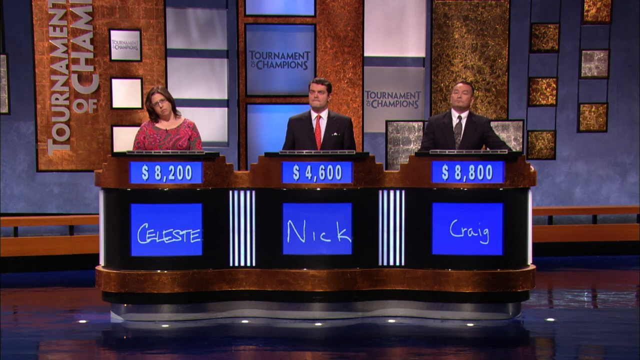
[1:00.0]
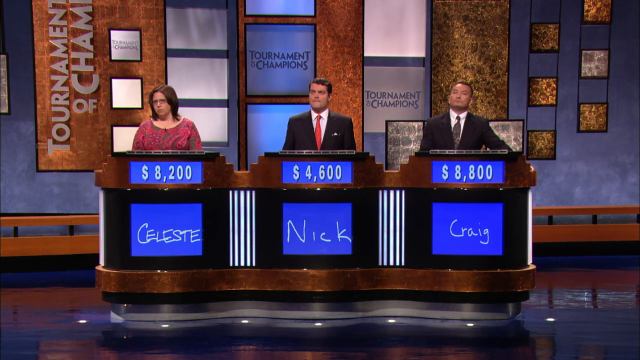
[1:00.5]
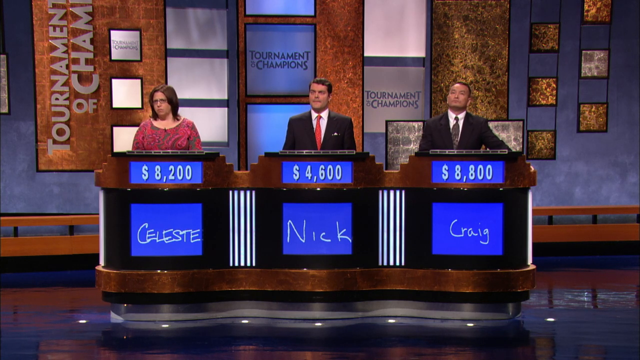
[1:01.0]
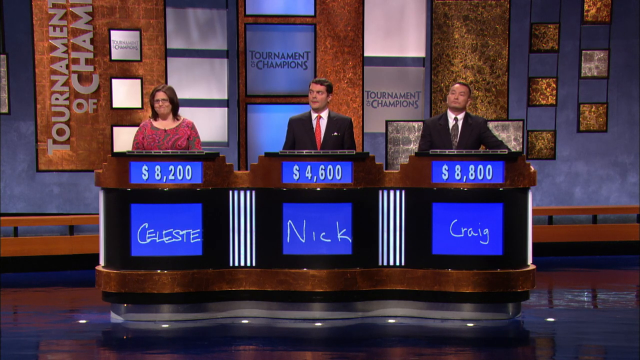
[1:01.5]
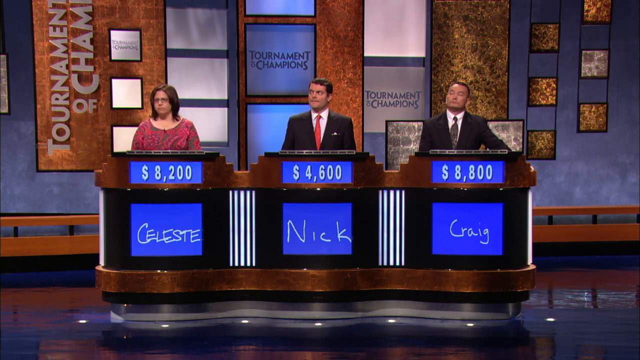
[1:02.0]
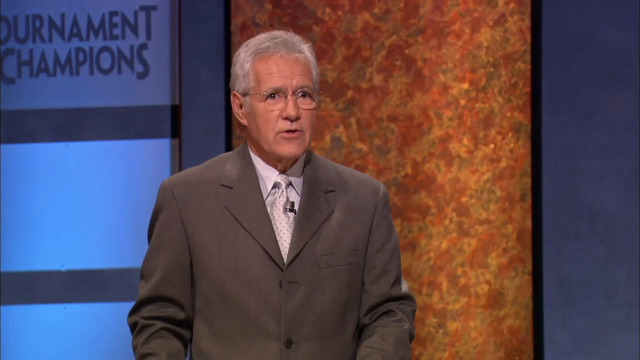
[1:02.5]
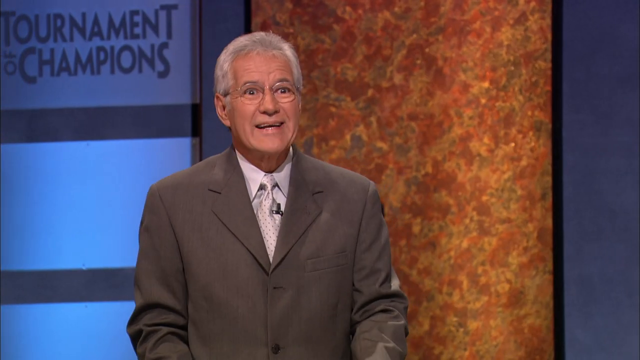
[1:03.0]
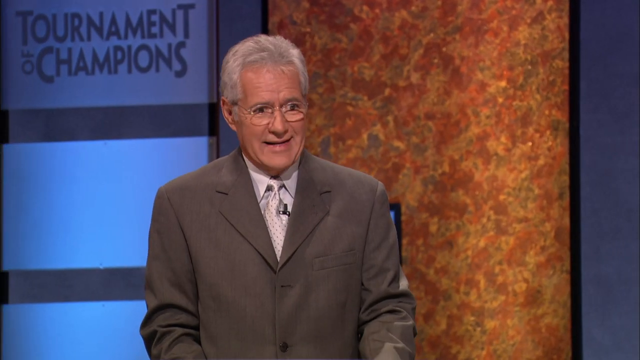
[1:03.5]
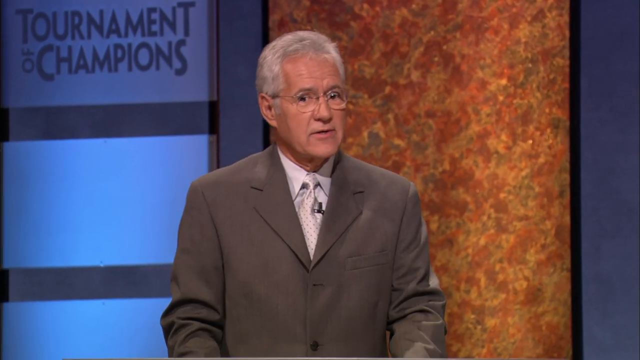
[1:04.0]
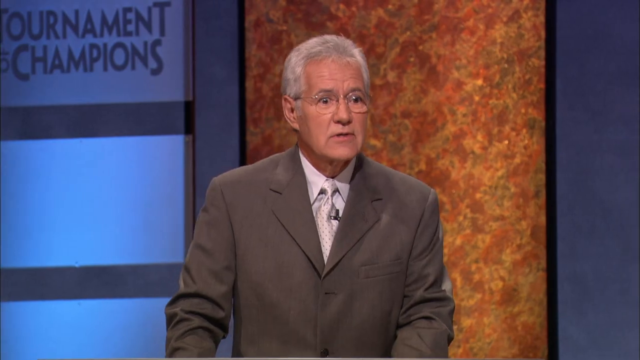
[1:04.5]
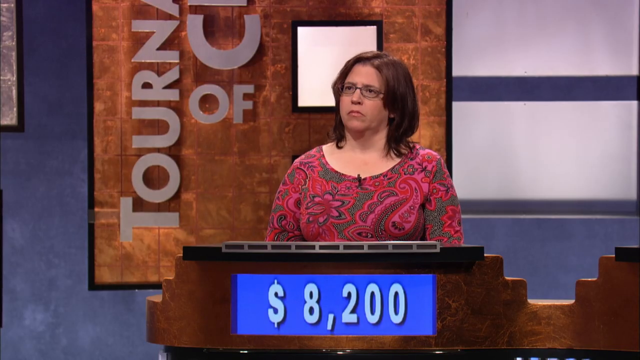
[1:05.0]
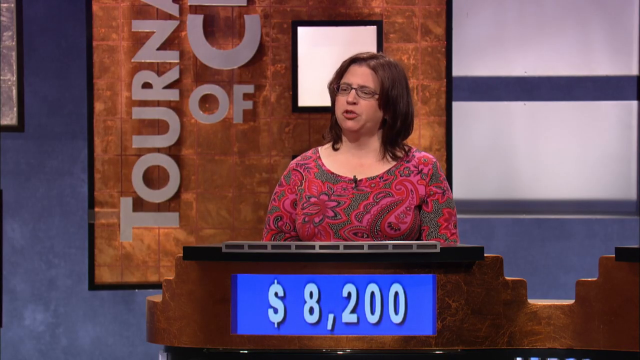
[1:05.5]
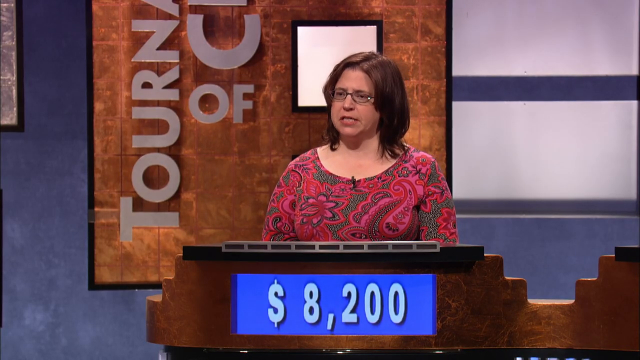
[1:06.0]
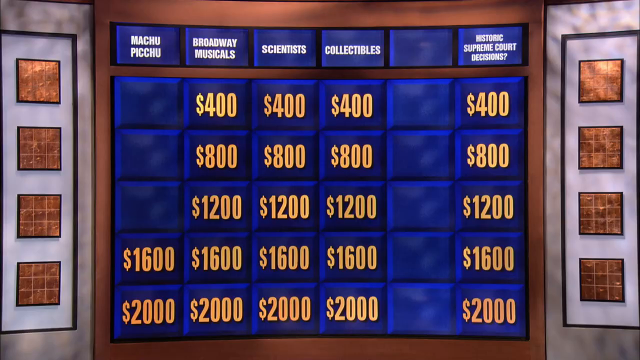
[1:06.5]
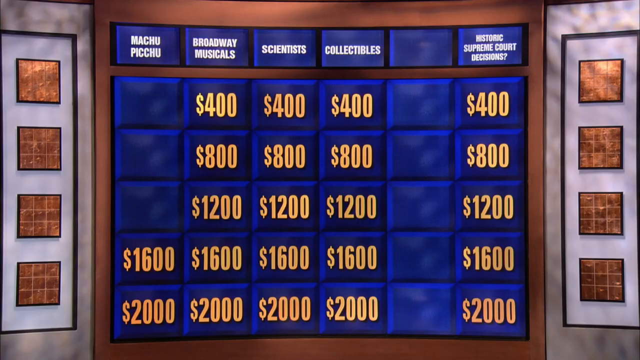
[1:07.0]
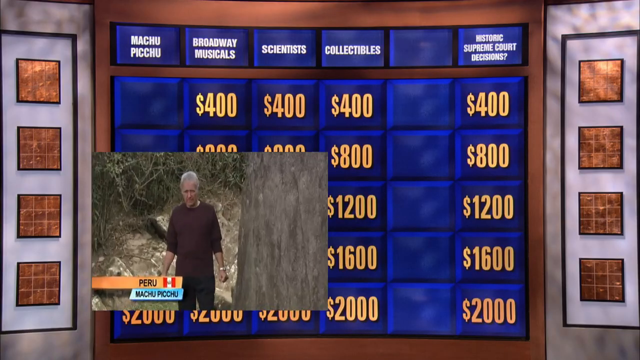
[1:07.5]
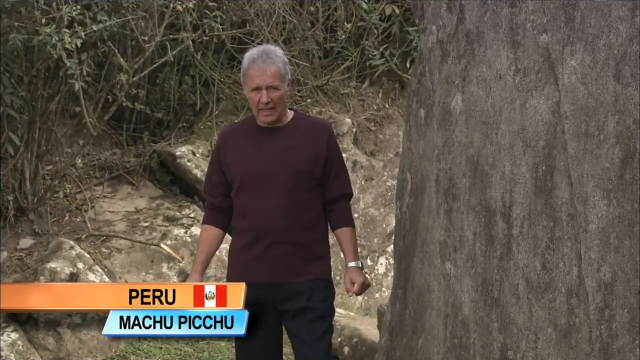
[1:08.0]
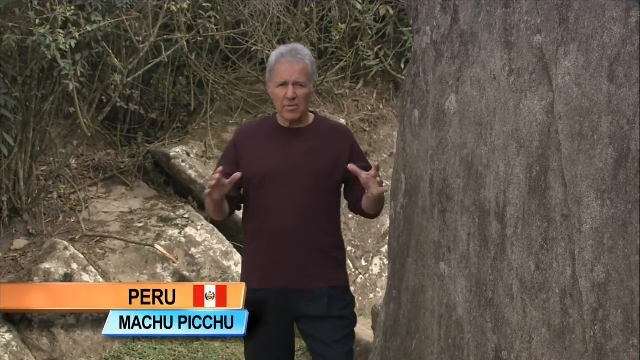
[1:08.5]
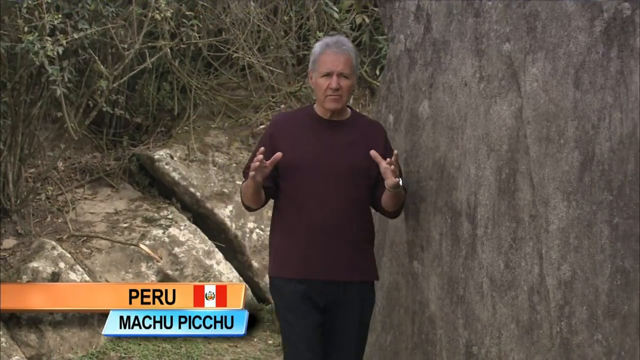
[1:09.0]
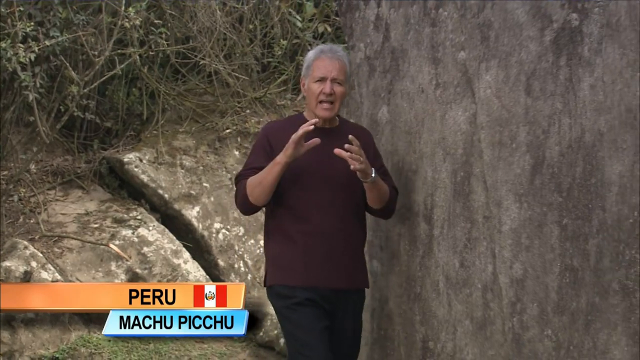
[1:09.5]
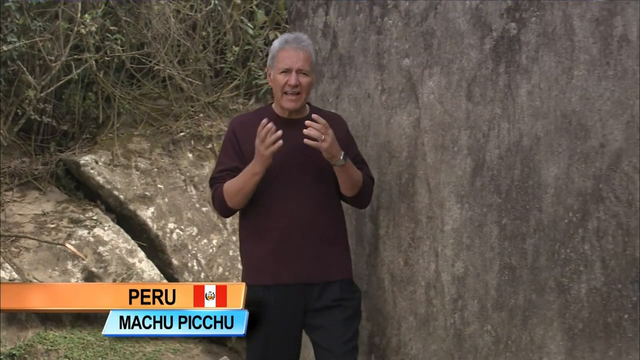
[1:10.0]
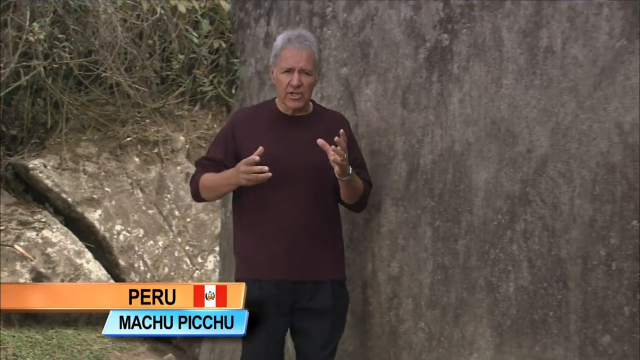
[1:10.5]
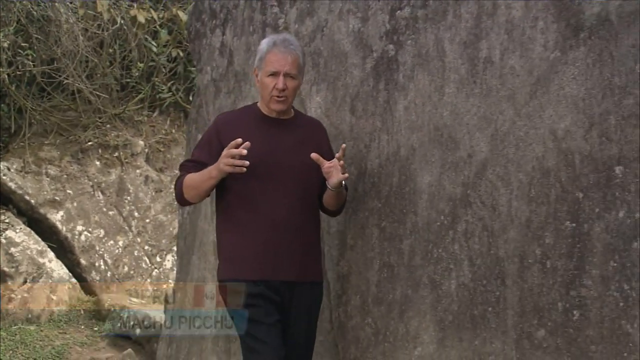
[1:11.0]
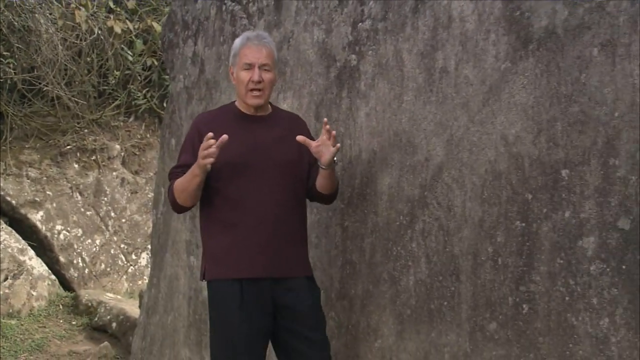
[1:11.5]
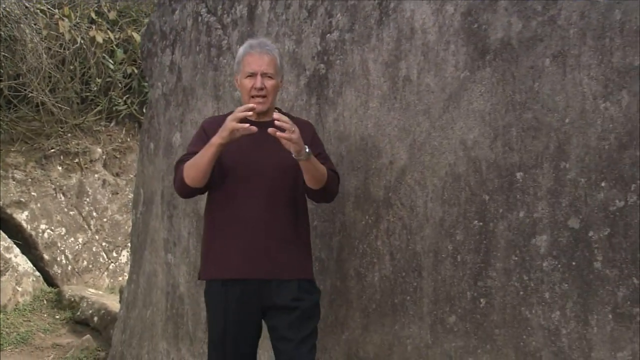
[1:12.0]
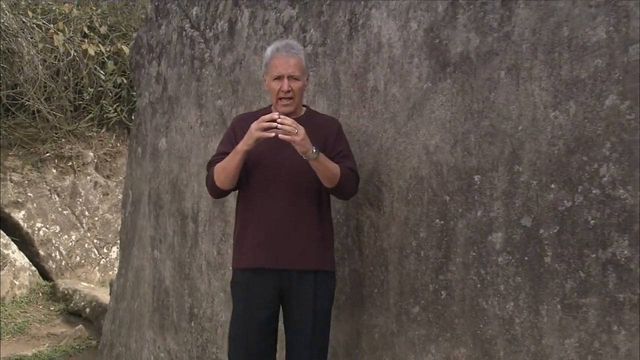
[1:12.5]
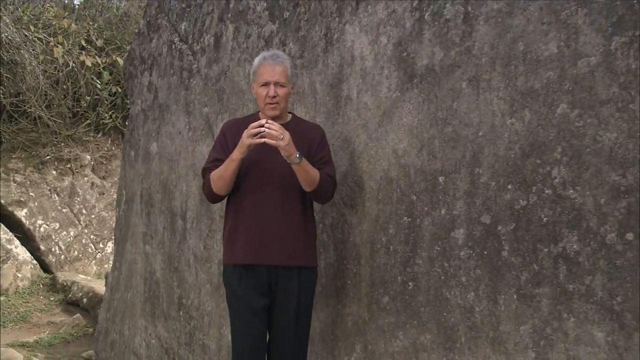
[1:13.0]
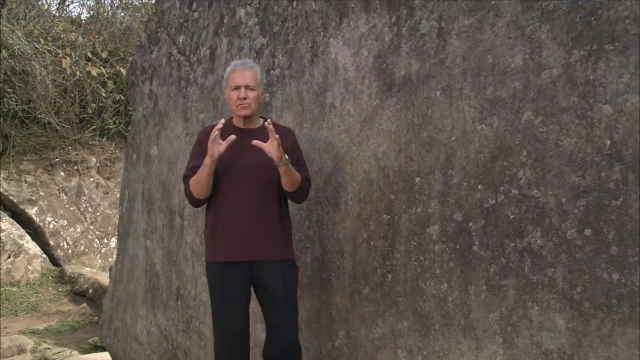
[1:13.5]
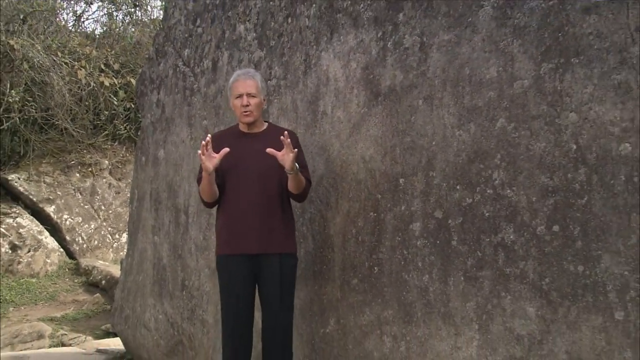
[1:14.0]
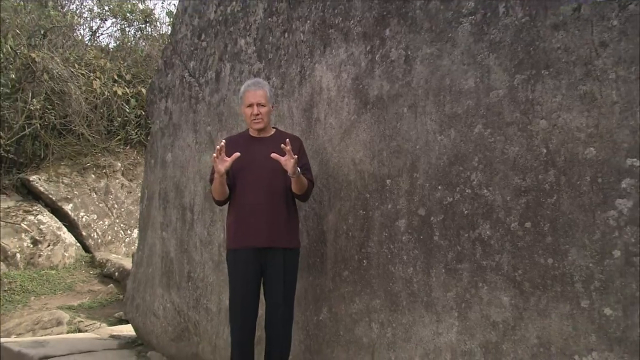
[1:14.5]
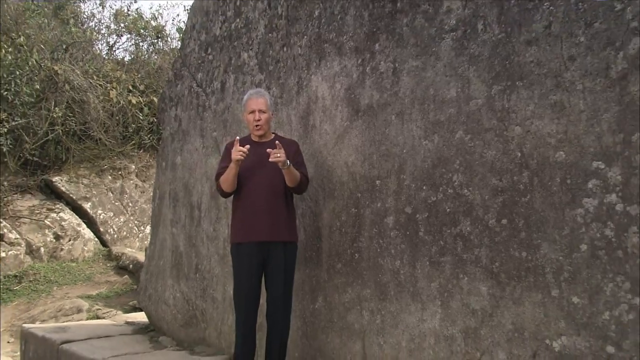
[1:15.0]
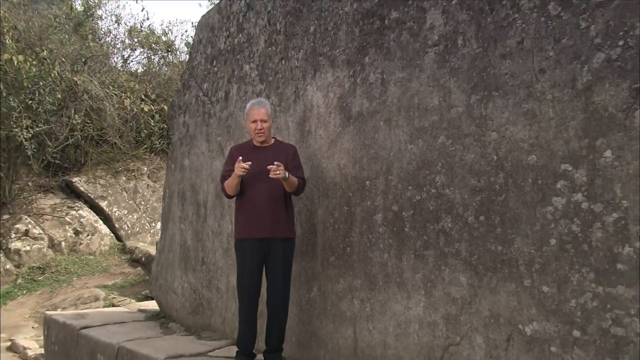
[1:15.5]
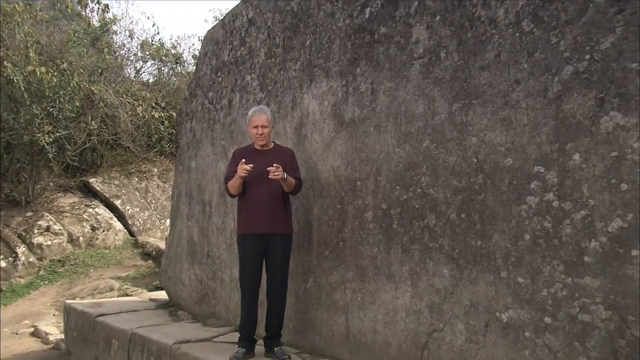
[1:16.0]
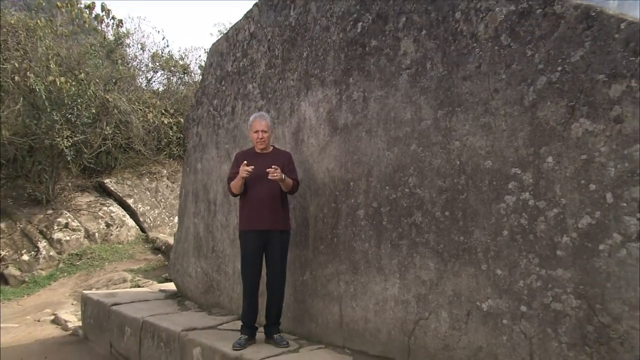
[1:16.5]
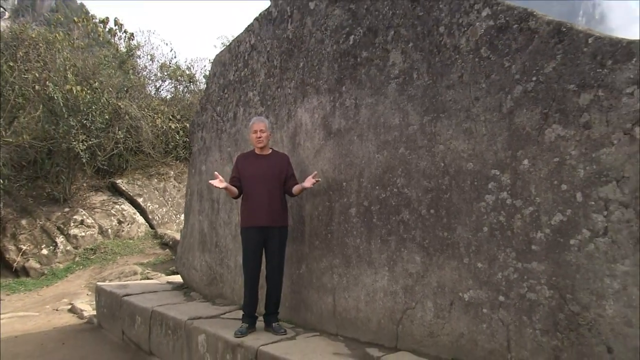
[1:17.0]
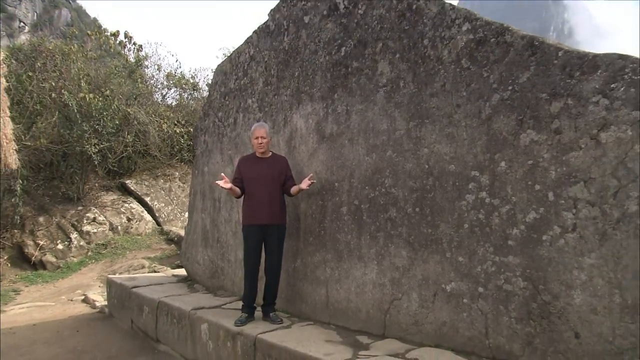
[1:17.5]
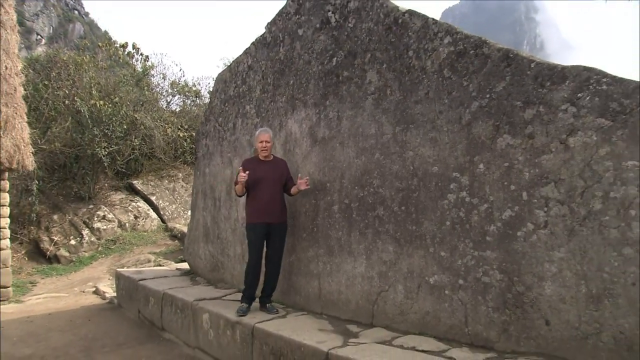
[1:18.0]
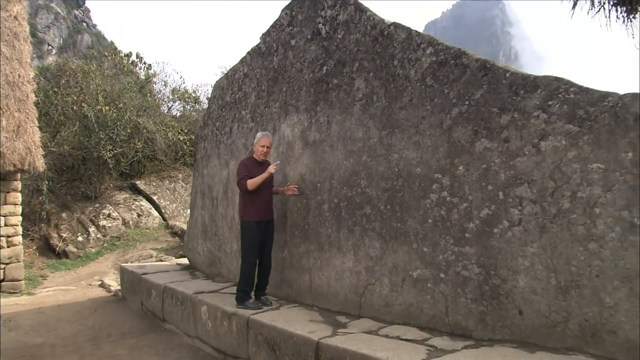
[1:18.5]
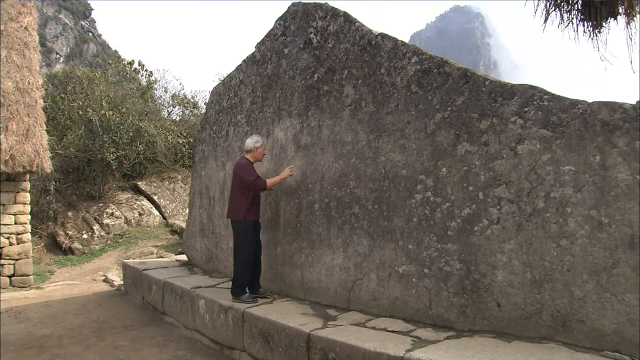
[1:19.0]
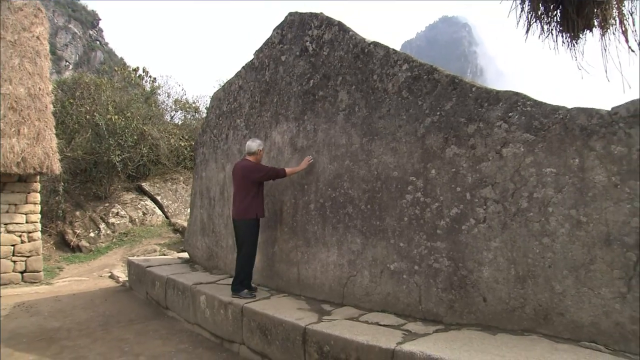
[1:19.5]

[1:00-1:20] The current leader is Craig with 8,800, then Celeste on the far left with 8,200, and Nick, in a black suit and red tie, with 46. Celeste's handwritten name is all connected: the C curves down so its bottom forms part of the E, and the L is joined to the middle line of the E. Nick's writing is spaced out, and in Craig's the bottom of the C connects to the R, with everything else spaced. Alex Trebek wears a baggy suit, especially around the arms. His hair matches his tie, which is almost a kind of silver with darker checks, and a sound clip is attached to the right side of the tie. He says, "back to you," and play returns to the woman, who picks the 1,600 clue. In Peru, Trebek rotates his arms as he walks, with a big wall behind him. He points while talking about something gathering together. He stands on a large wall that points upward; on the left side it comes up and then slants diagonally up. He then puts his hands out on the wall behind him, almost as if he is being arrested.